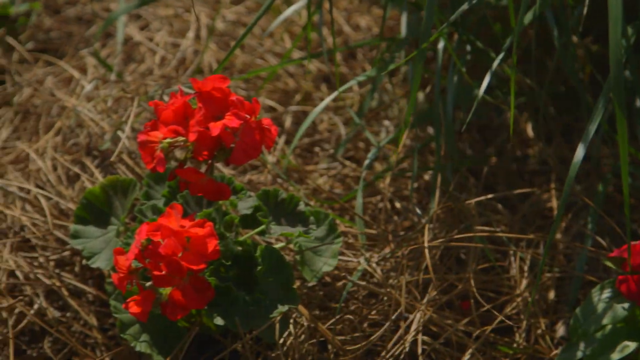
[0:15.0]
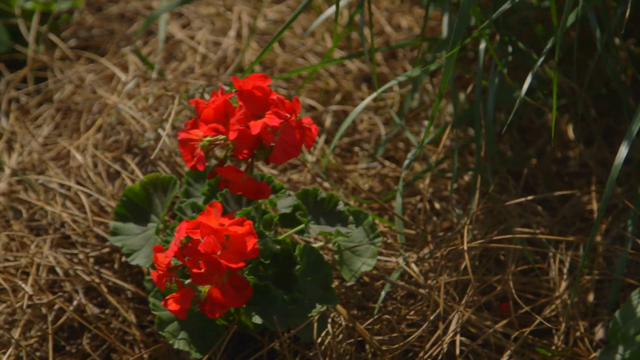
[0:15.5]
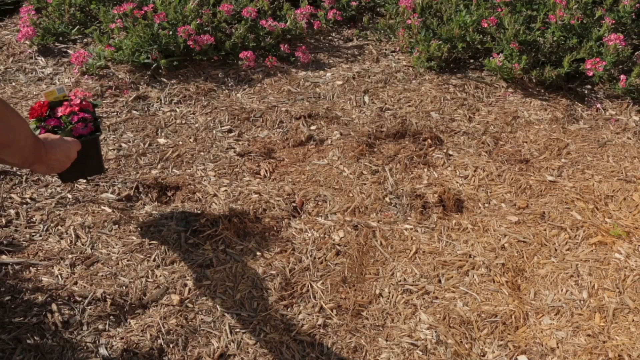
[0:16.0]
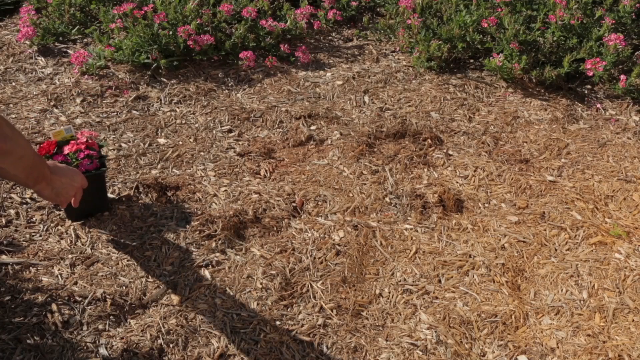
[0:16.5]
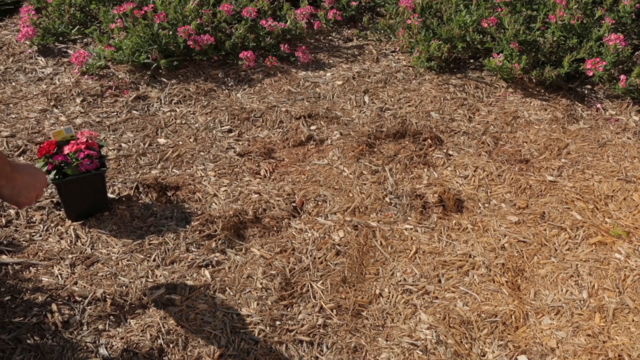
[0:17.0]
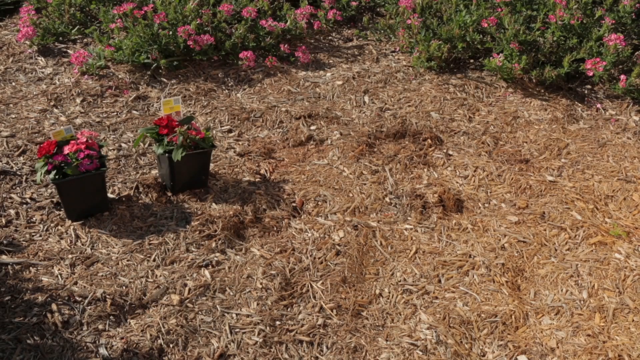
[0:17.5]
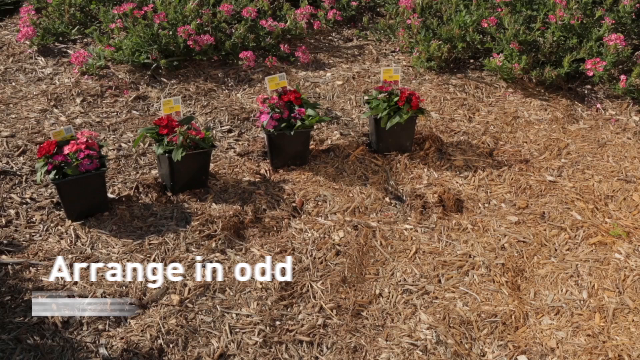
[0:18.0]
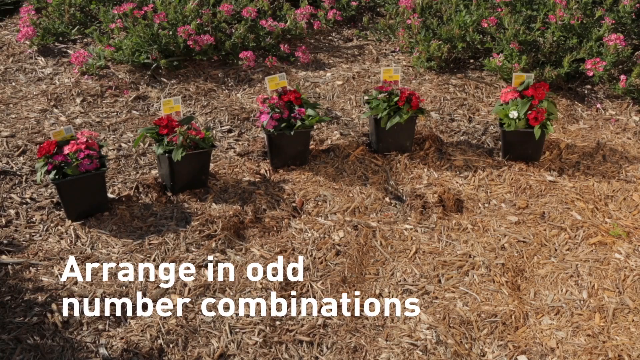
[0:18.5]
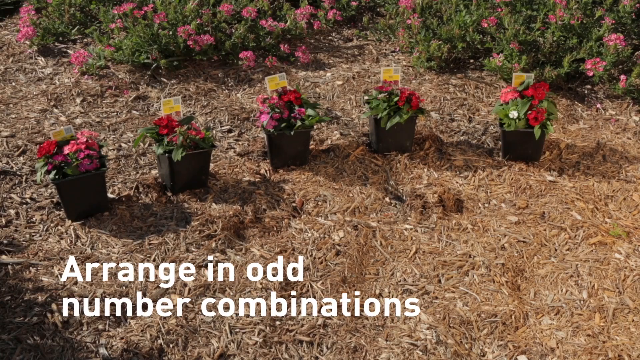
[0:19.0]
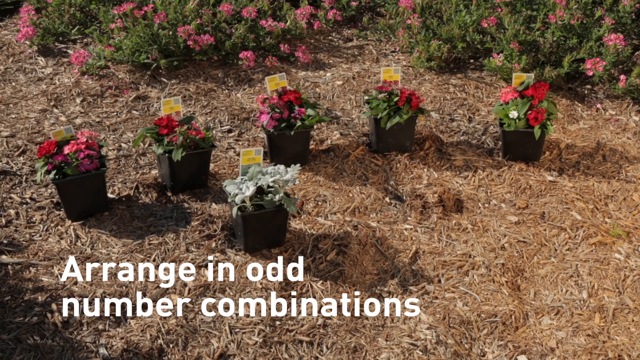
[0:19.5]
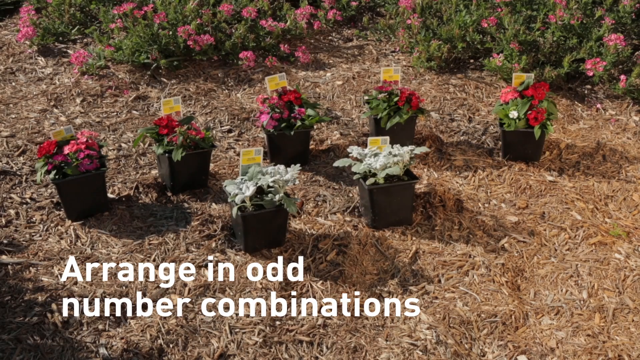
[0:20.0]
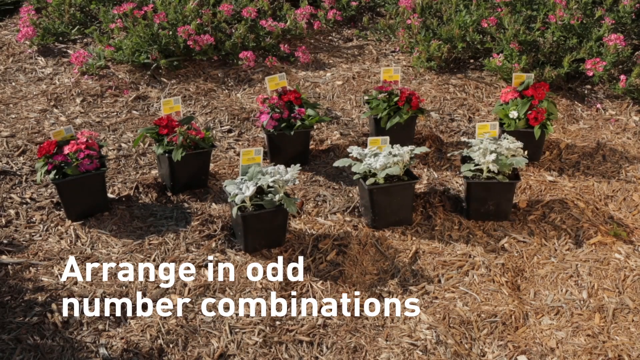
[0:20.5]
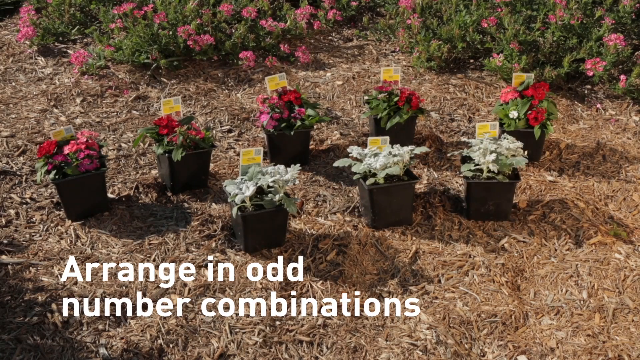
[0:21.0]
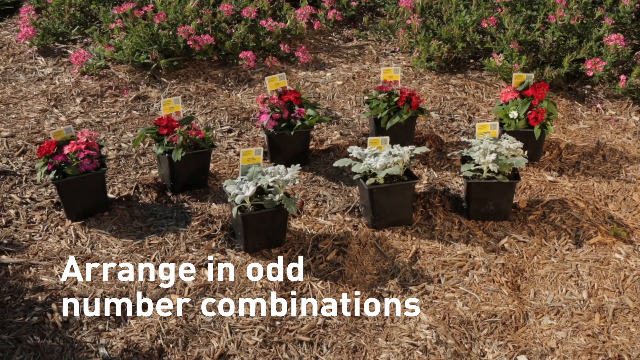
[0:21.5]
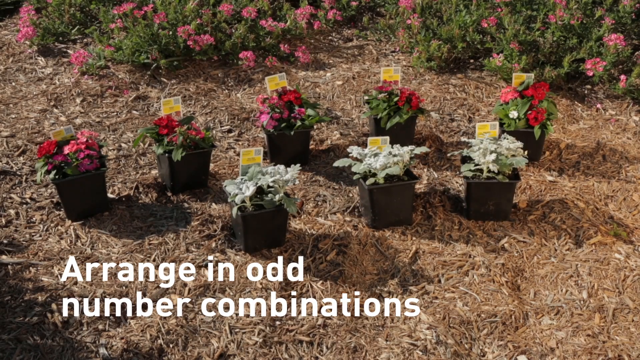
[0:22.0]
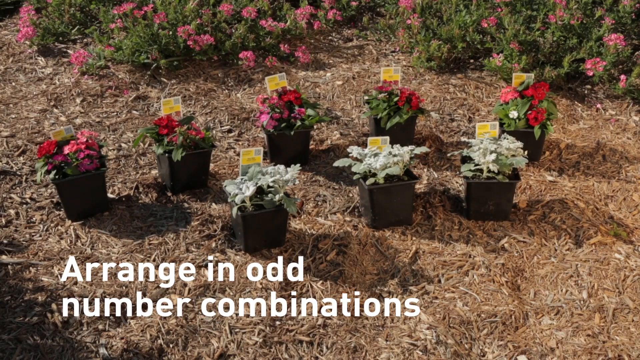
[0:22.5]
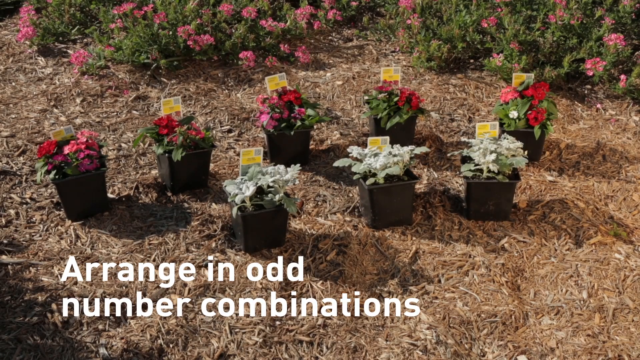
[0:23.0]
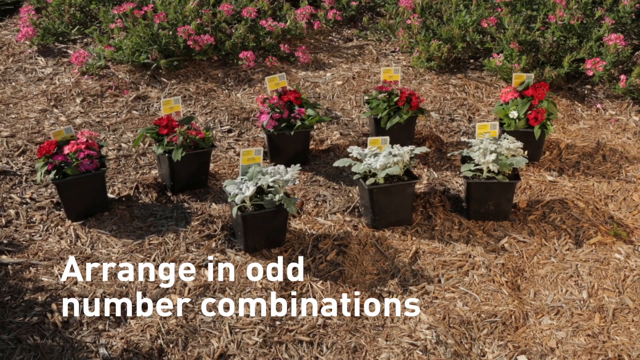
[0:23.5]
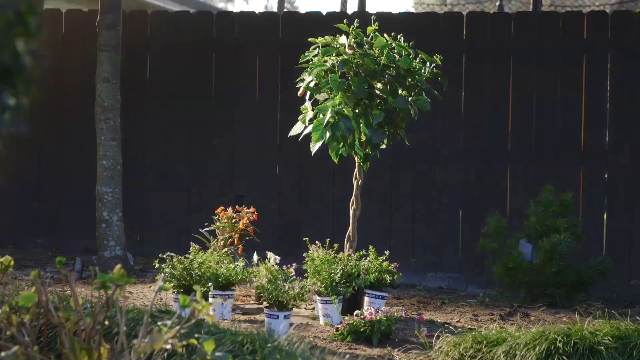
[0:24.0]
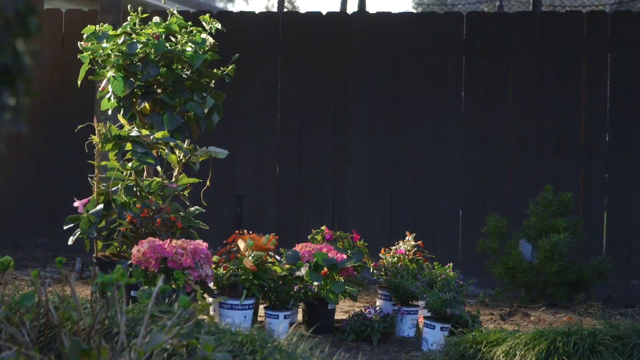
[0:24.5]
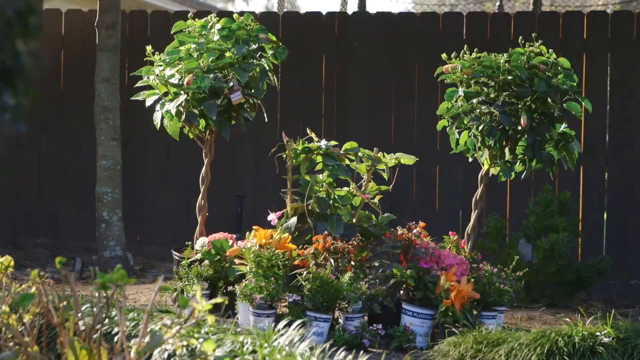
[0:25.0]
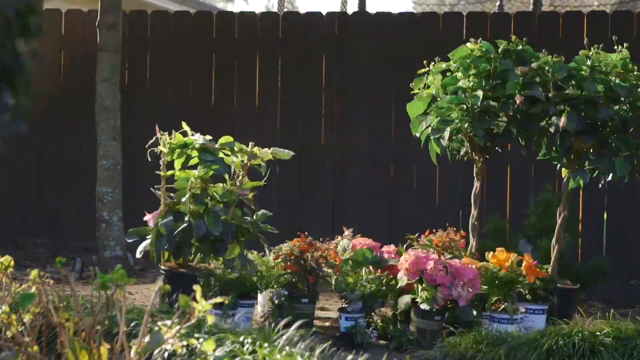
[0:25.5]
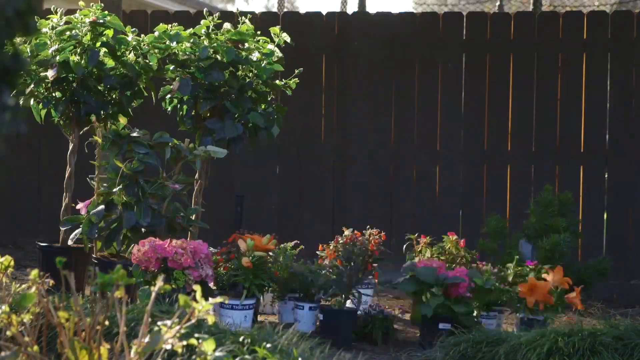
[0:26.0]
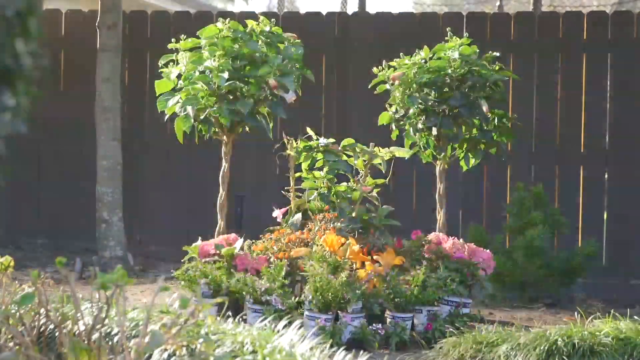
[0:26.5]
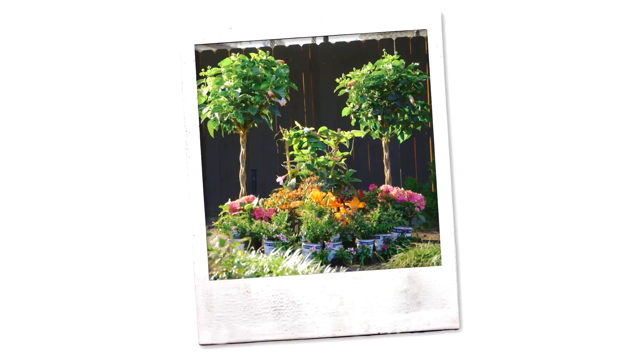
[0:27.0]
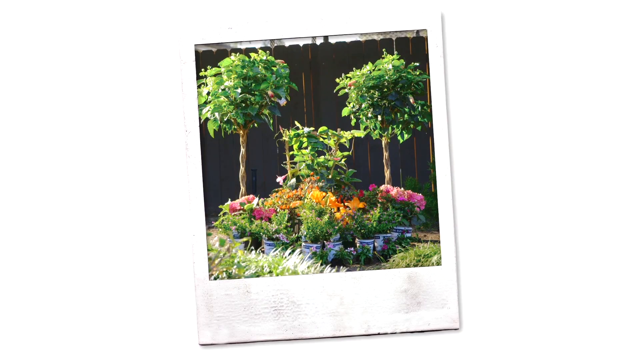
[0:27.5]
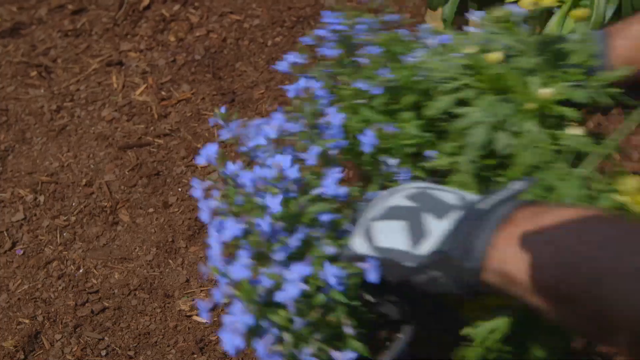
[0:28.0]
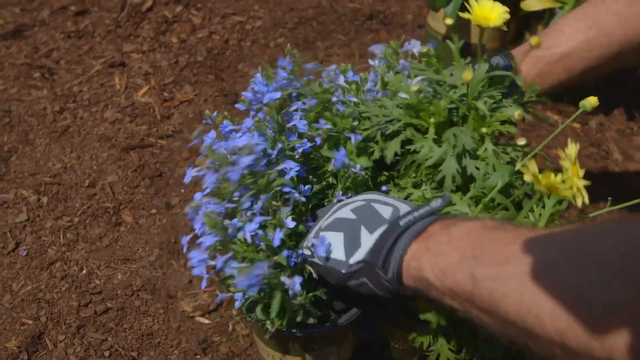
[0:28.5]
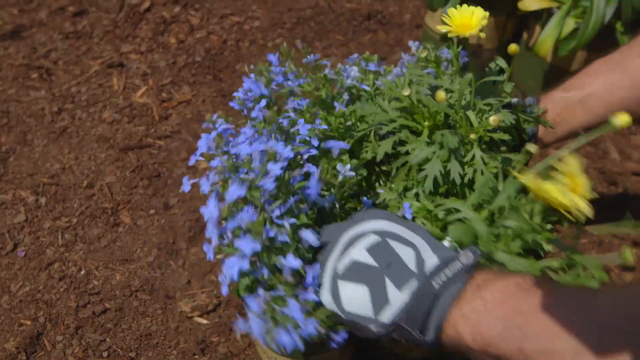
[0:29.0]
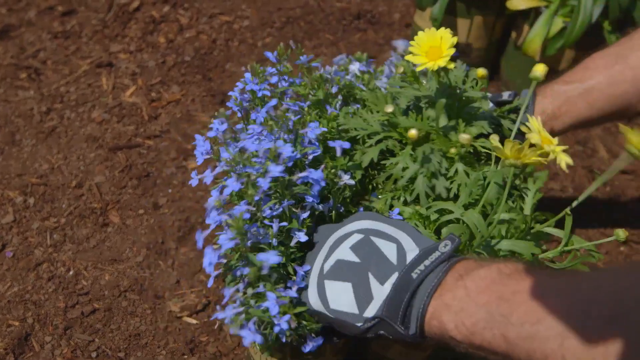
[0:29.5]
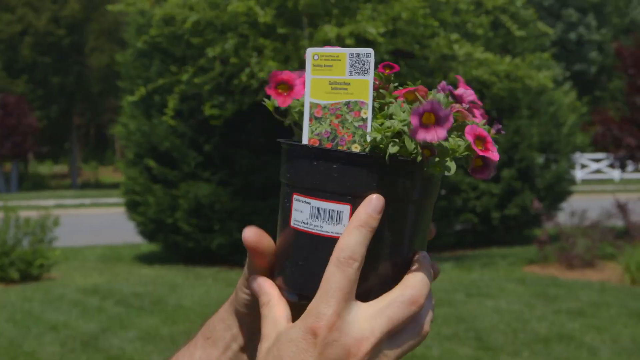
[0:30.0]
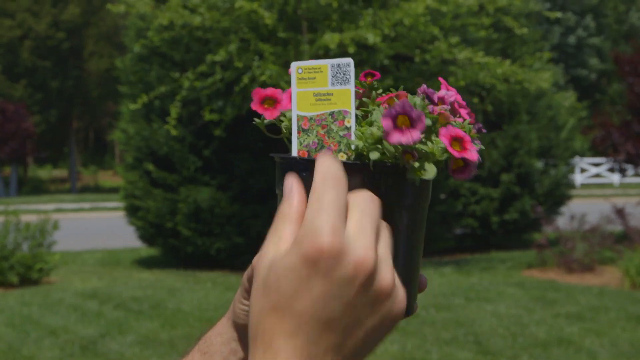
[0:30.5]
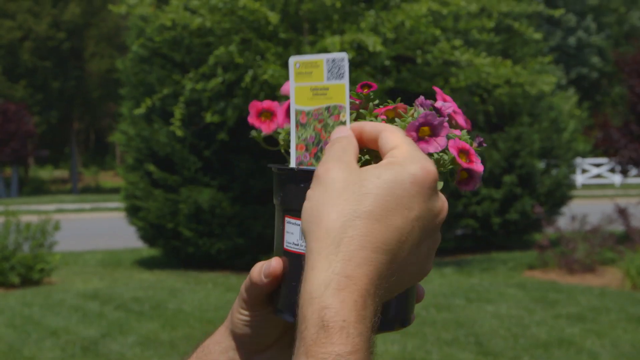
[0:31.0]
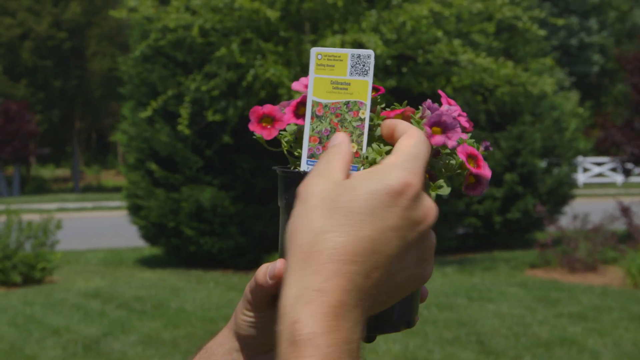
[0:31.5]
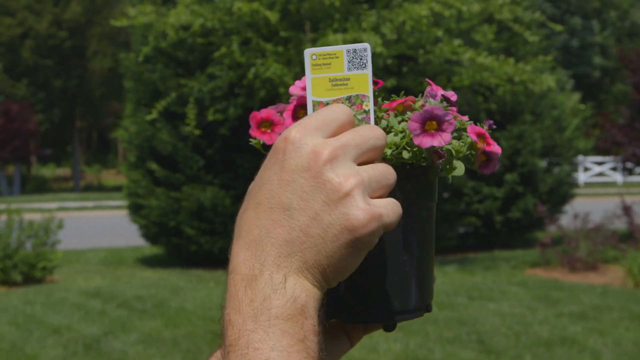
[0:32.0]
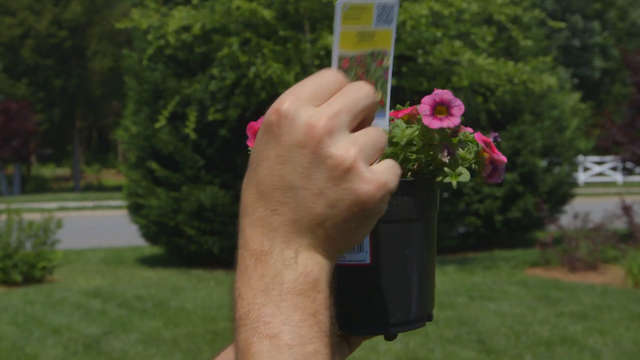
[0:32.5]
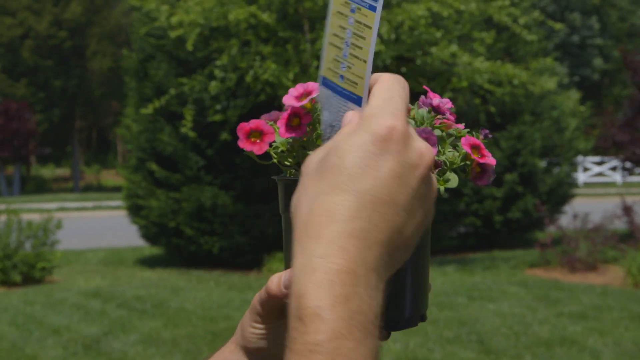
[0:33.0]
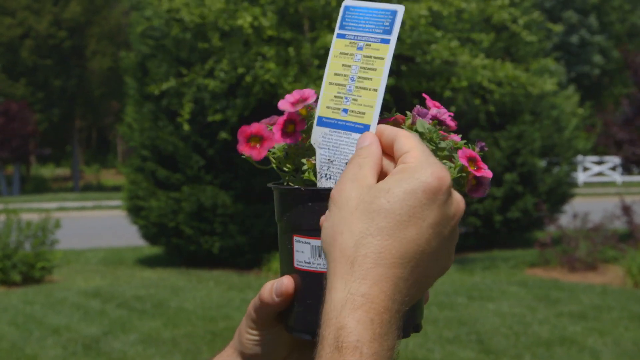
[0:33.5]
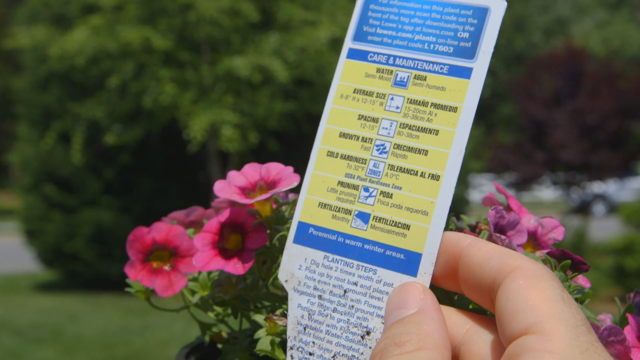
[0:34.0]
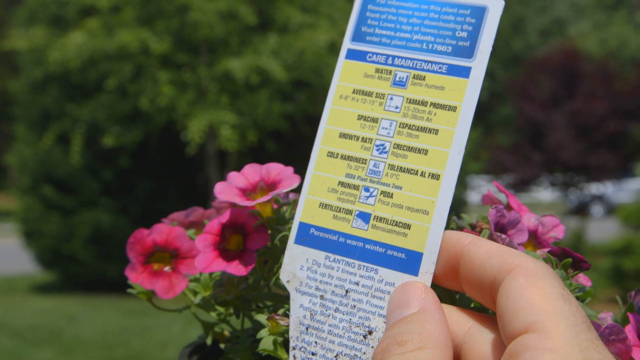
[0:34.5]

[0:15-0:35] The red flowers are shown again from closer, with the camera zoomed in a little and panning from right to left. Someone places a small pot of flowers down on the ground, with only their hand visible from the left of the frame. Through editing, more pots of flowers start appearing, going from 2 to 3, 4 and then 5, with a caption below that says "arrange in odd number combinations." Three more pots are then added in front, for a total of 8. Another screen shows other plant arrangements: a tree with some additional pots of flowers in front of it, which are quickly rearranged in a sort of sped-up mode as the trees and flowers keep getting rearranged. Next comes a Polaroid on a white background depicting one arrangement with two tall trees and smaller flowers and plants in the middle. Someone then places purple and yellow flowers down on the dirt, and someone holding a pot of pink flowers pulls a card out of the pot and shows the card to the camera.